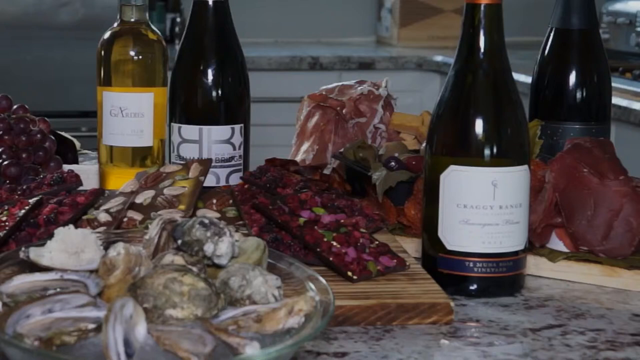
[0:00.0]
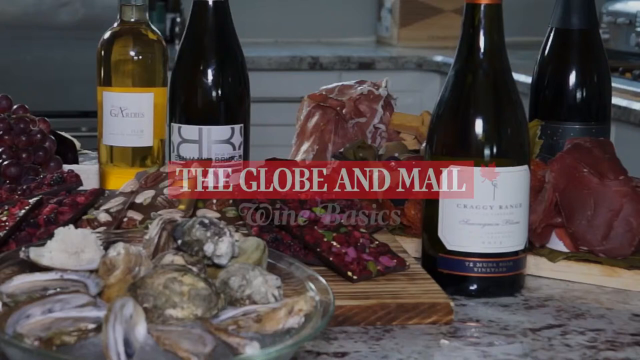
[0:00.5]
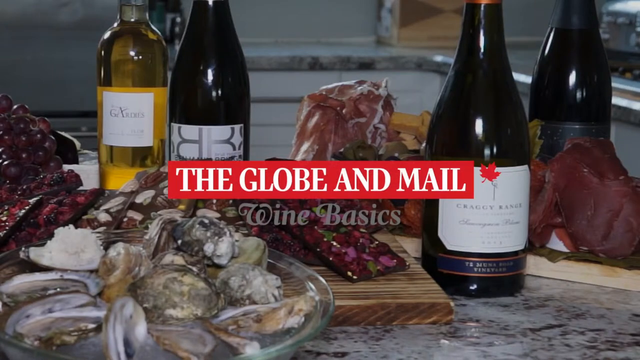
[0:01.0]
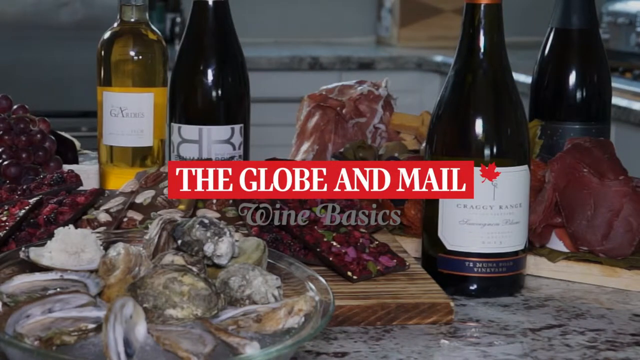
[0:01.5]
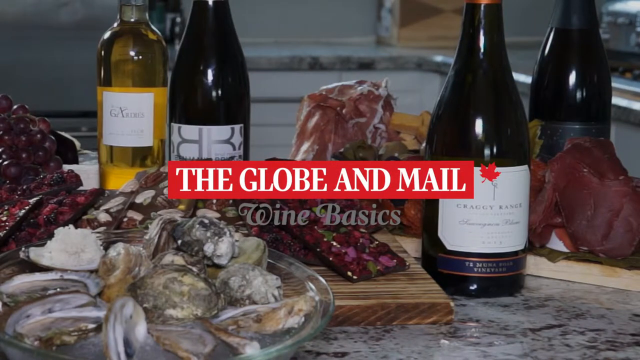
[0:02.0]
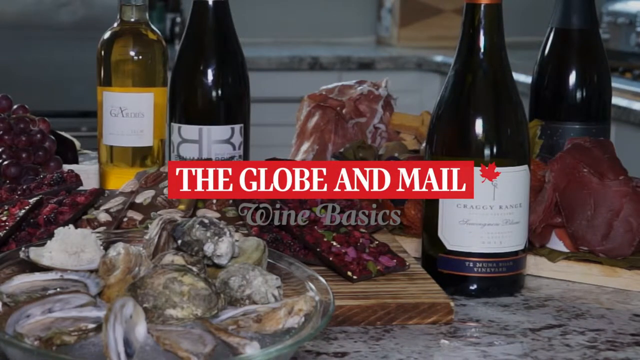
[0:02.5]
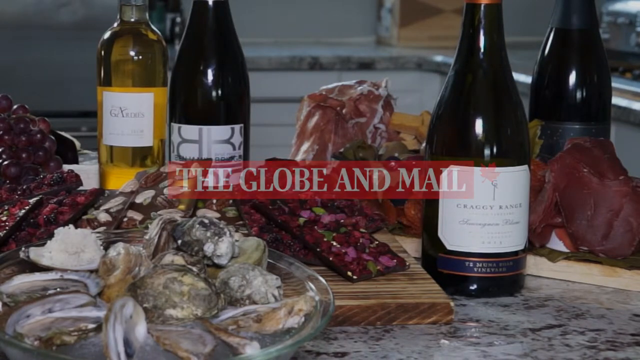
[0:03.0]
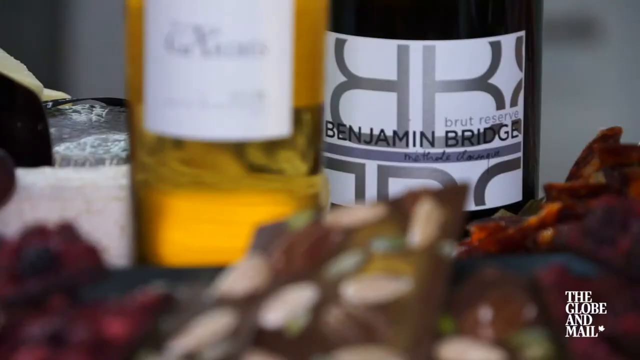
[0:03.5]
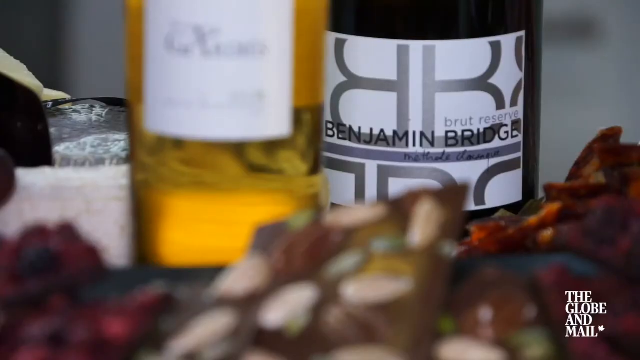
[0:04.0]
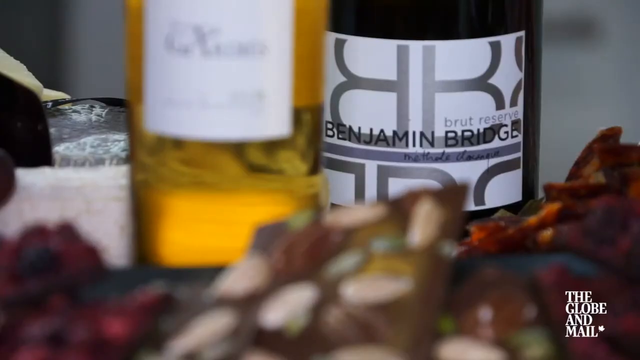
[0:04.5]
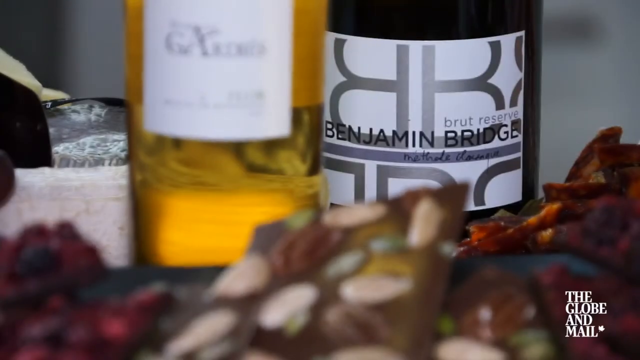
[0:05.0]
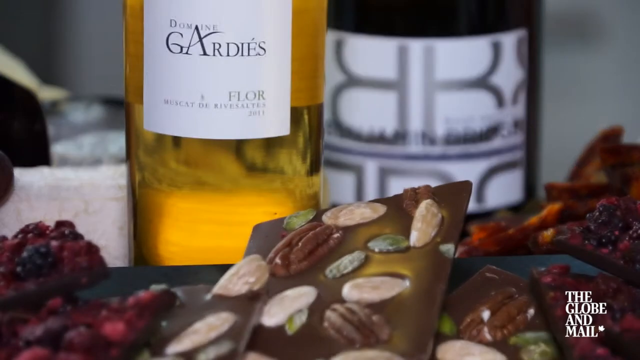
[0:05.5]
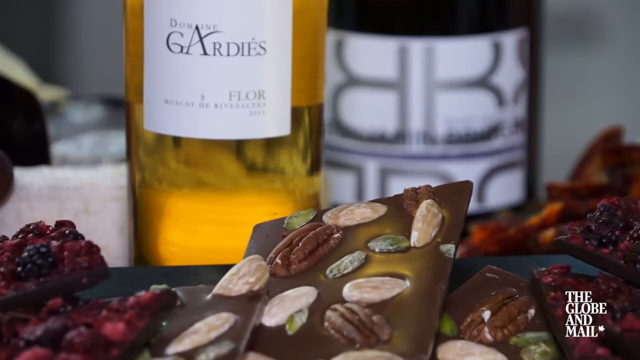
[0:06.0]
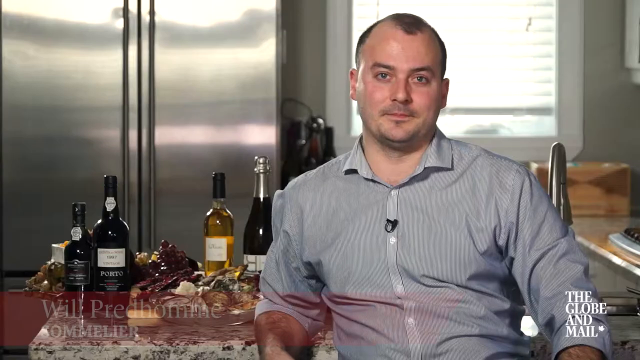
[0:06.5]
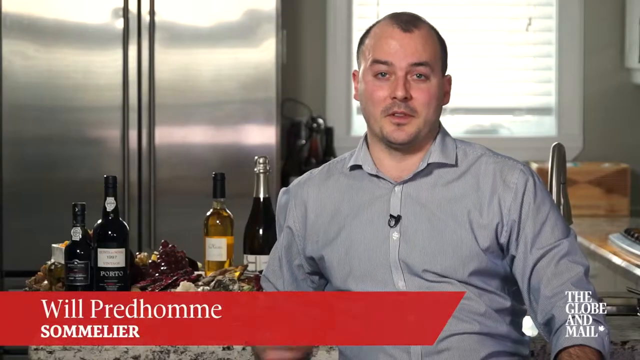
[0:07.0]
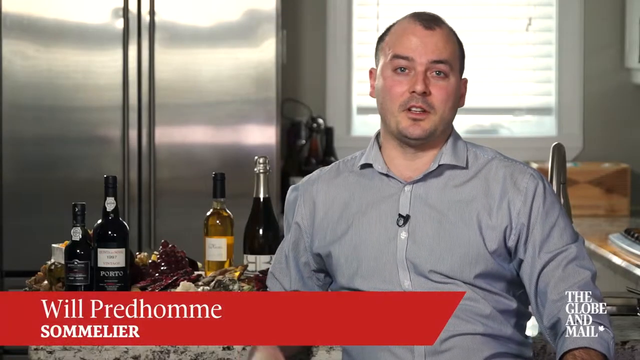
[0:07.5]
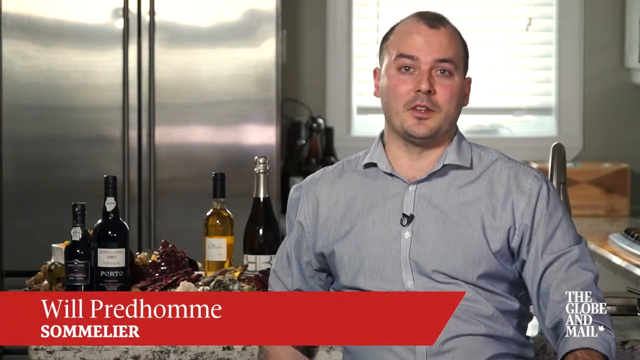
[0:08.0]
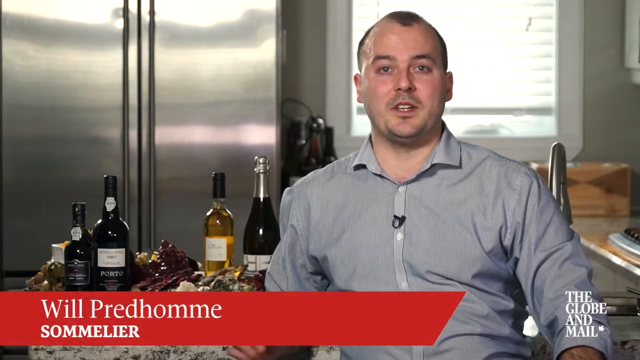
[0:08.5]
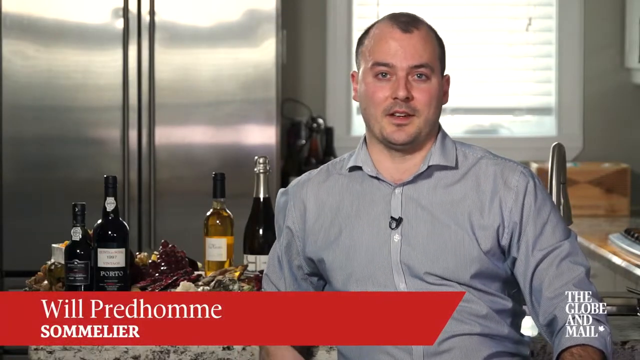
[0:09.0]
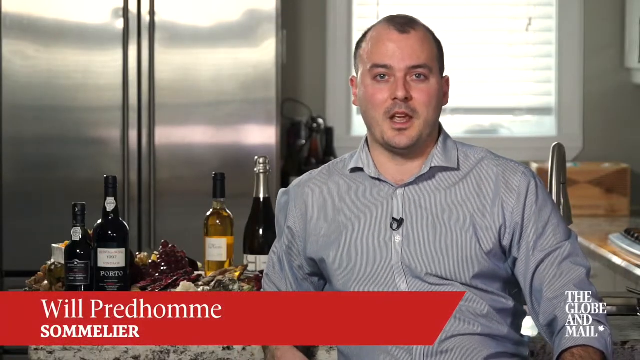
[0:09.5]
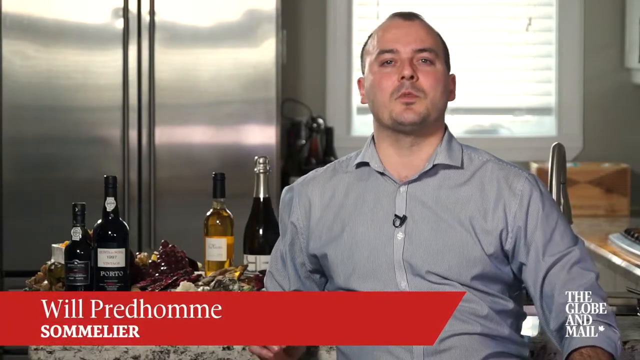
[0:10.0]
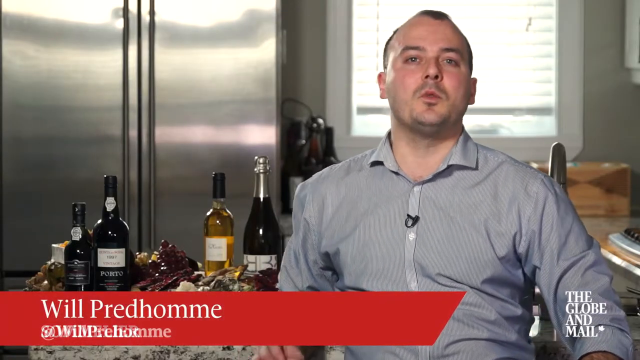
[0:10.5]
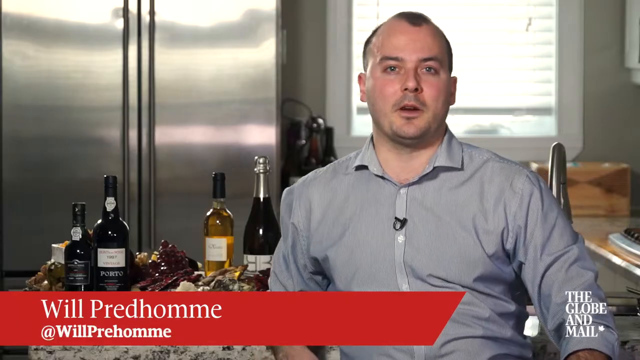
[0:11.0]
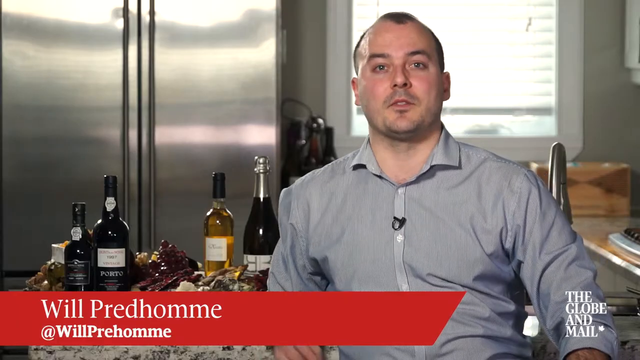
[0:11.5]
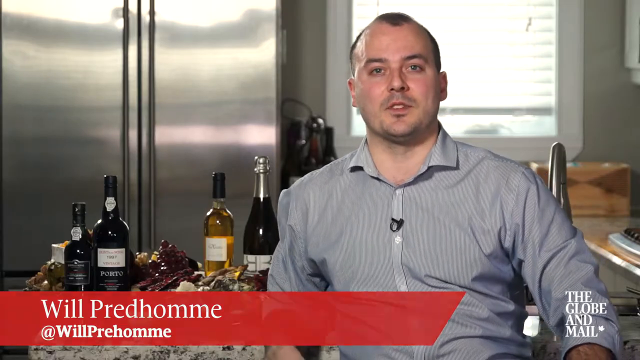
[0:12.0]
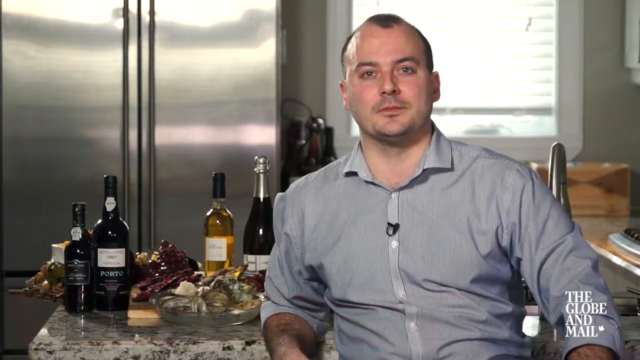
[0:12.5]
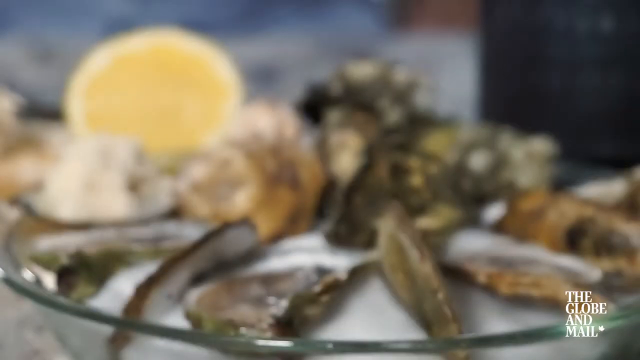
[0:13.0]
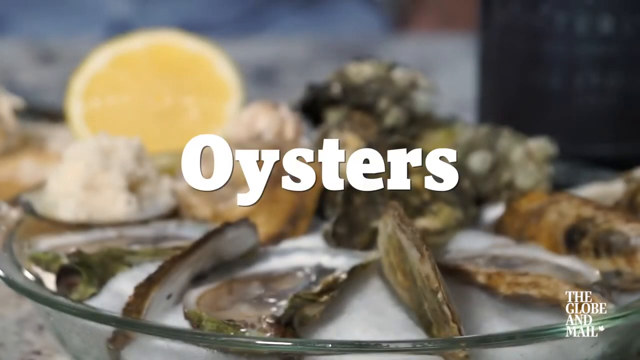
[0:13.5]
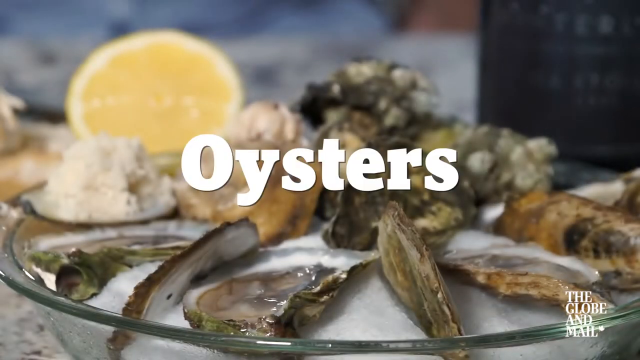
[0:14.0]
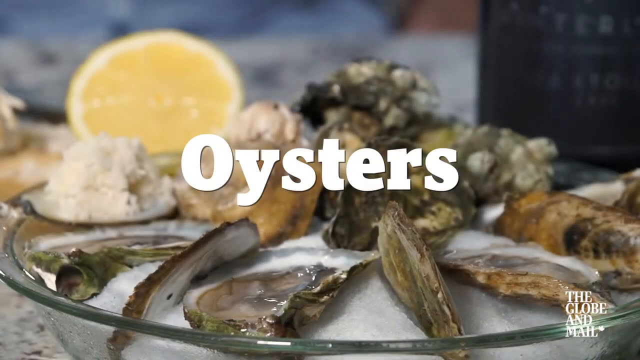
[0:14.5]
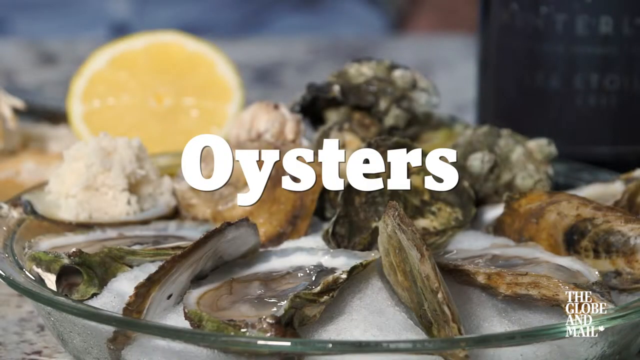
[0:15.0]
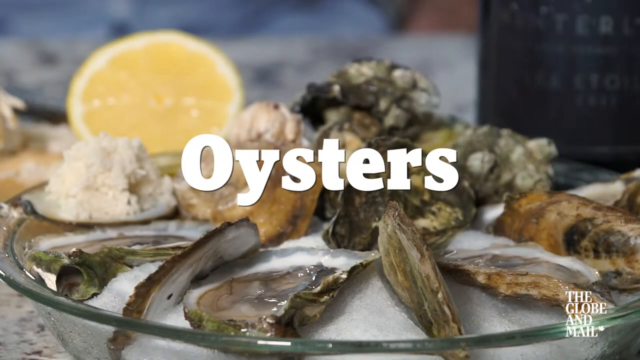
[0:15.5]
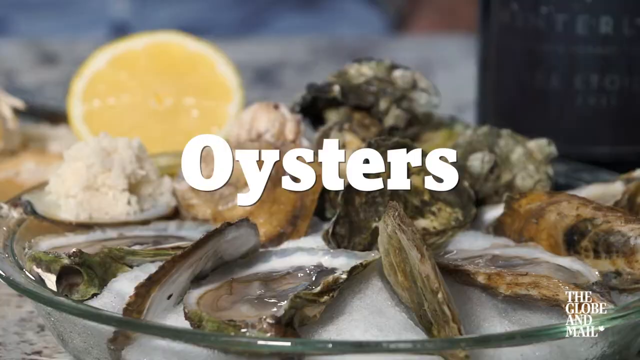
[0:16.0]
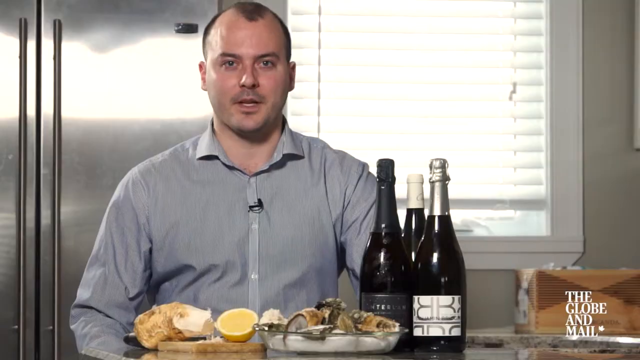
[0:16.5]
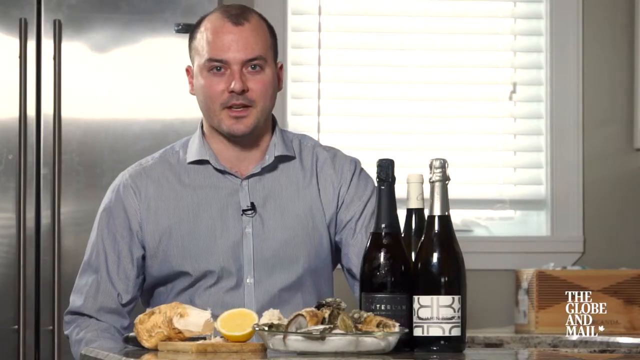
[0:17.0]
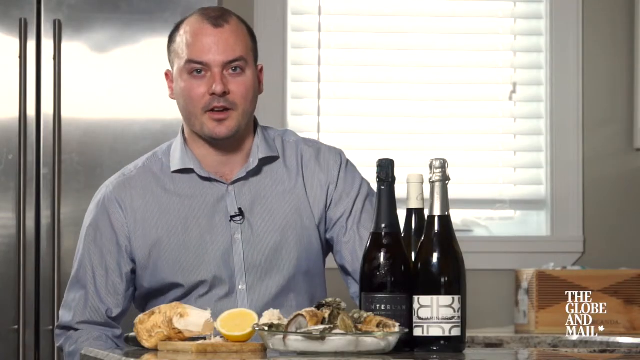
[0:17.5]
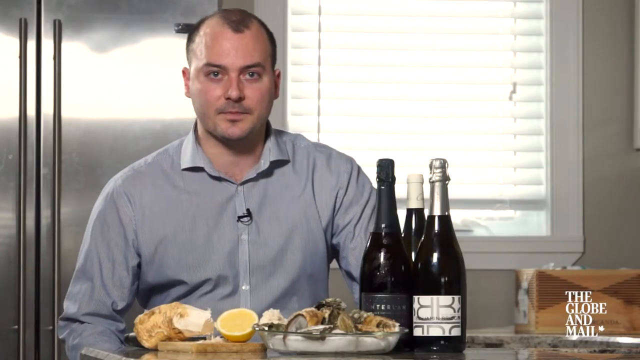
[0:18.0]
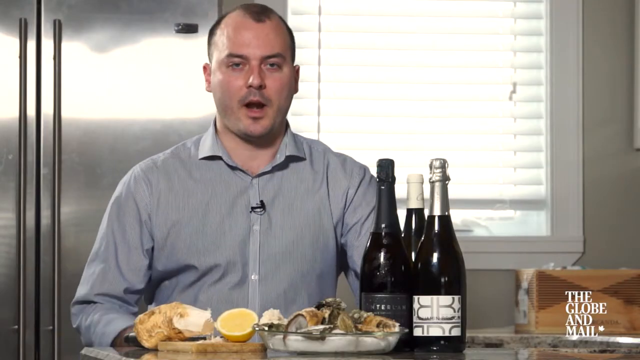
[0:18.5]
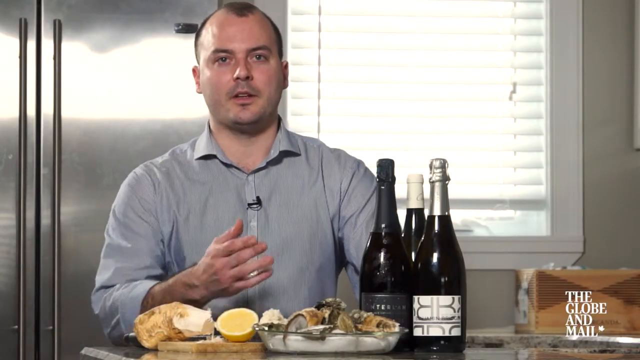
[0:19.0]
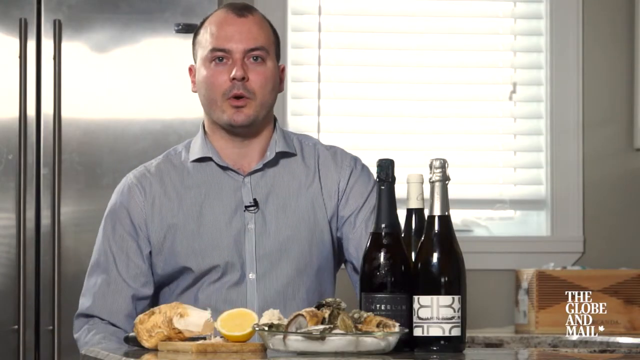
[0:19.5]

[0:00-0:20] Images open on three red wines and a white wine on a table, with various other food items around them. Text flashes on the screen reading "the globe and mail" in white on a red background, with "wine basic" in gray underneath. One of the white wines is named Craggy. Red grapes are on the table, and an oyster is in a glass dish, also on the table. In the background are cabinets and the kitchen slab. The view zooms in on one red wine's label, which reads "Benjamin Bridge" in black, with the text "Wood Reserve" in gray above it; the background is a mixture of gray, white and purple. At the bottom right of the screen, text reads "Globe and Mail" in white. The video transitions to a partly bald man in a gray shirt with a mic attached to it. His name is revealed as Will Predhomme, a sommelier, written in white on a red background. Behind Will are bottles of wine. Another transition shows a zooming image of the oyster, with the text "oyster" in white in the center of the screen and a sliced lemon in the background. Will stands behind the table, which holds three red wines: one with a black cover, one with a white cover and one with a silver cover. Will briefly moves his hand as he communicates.